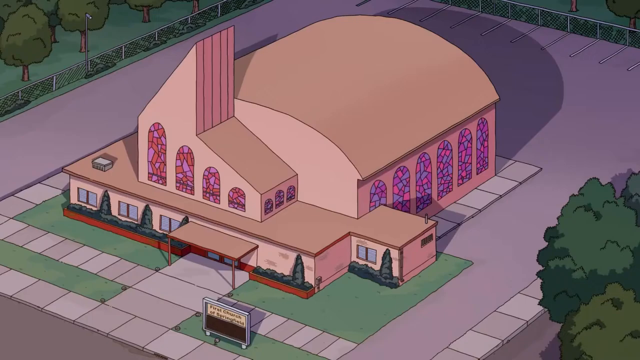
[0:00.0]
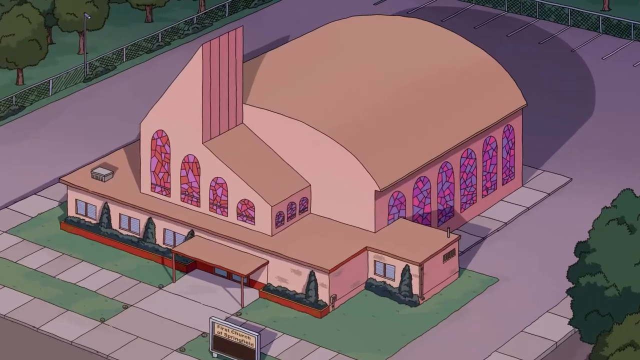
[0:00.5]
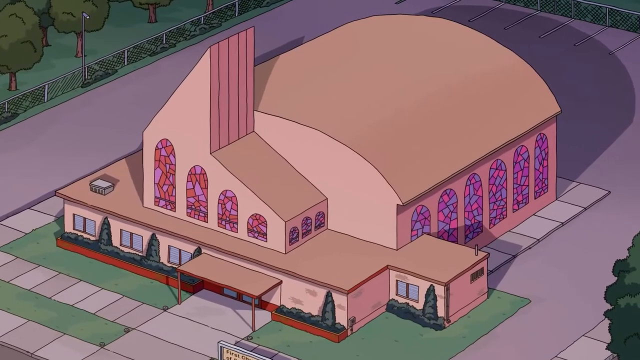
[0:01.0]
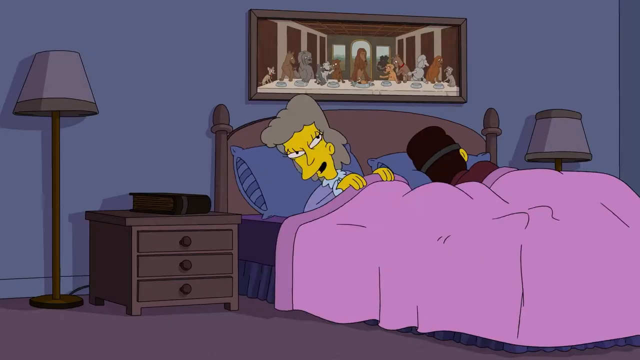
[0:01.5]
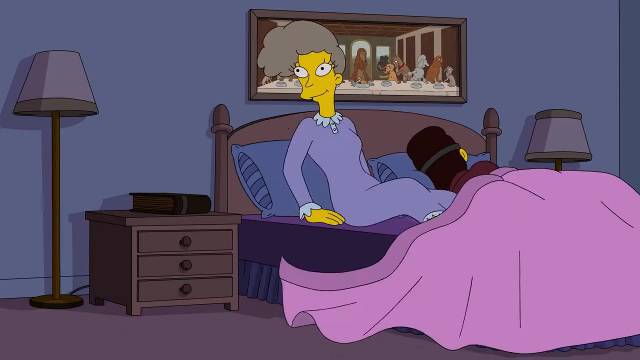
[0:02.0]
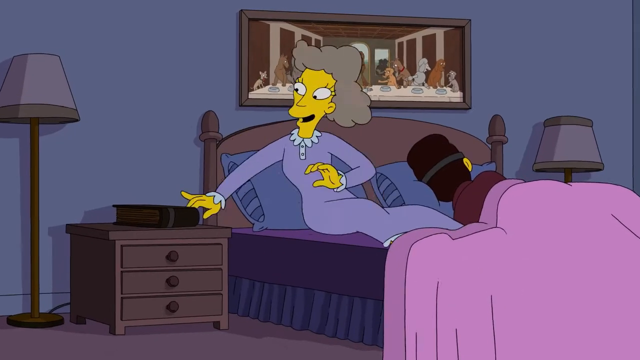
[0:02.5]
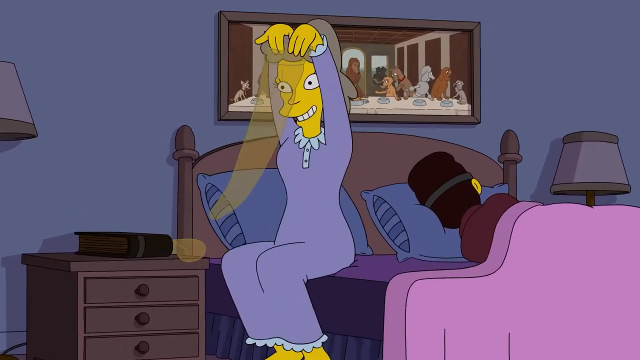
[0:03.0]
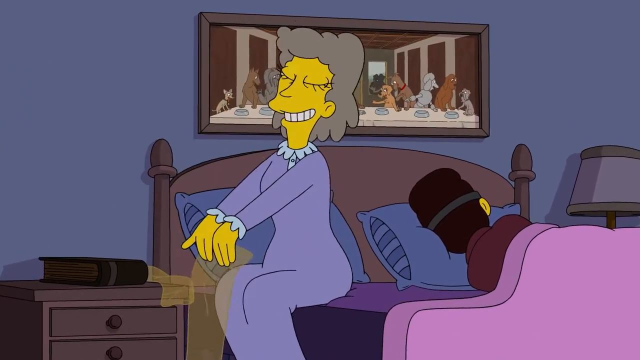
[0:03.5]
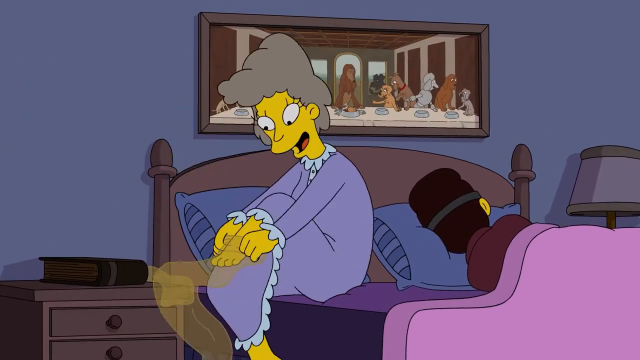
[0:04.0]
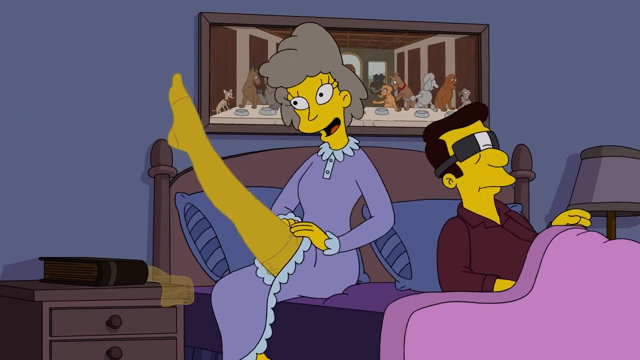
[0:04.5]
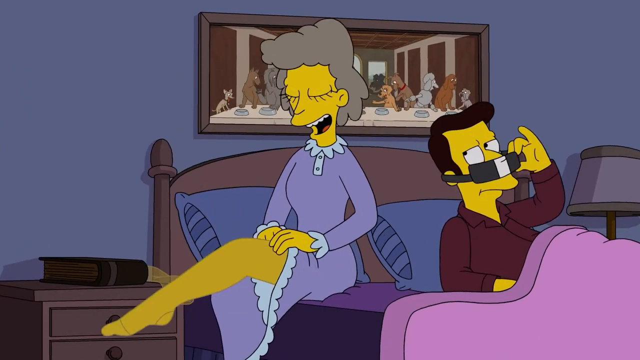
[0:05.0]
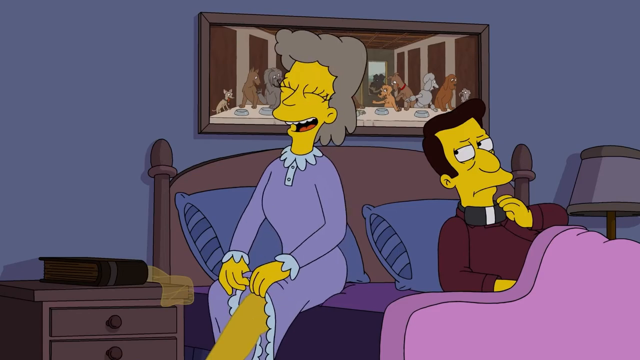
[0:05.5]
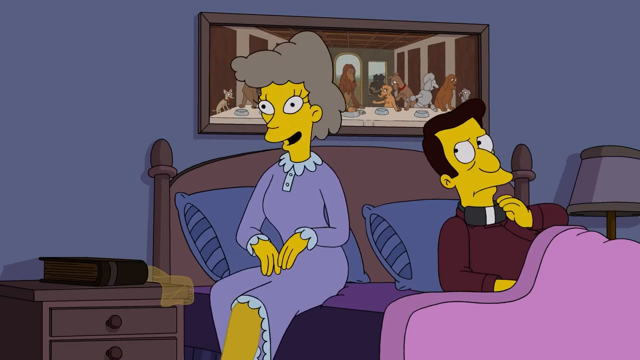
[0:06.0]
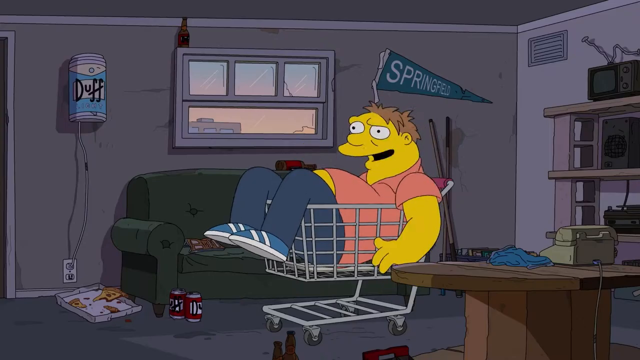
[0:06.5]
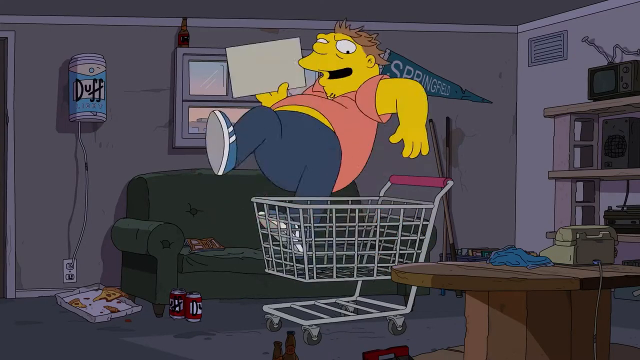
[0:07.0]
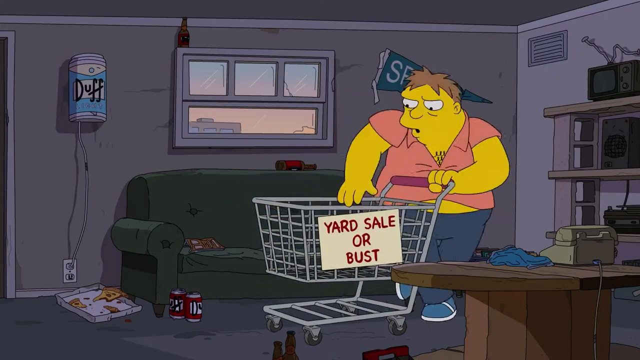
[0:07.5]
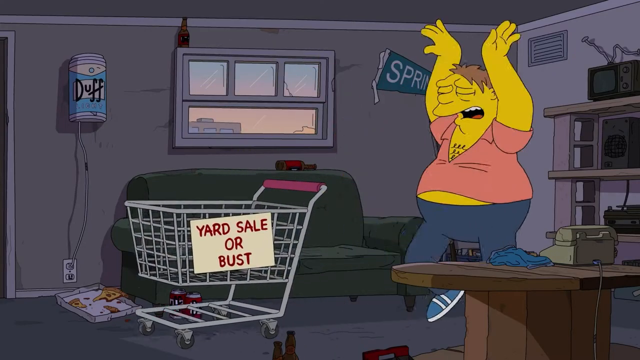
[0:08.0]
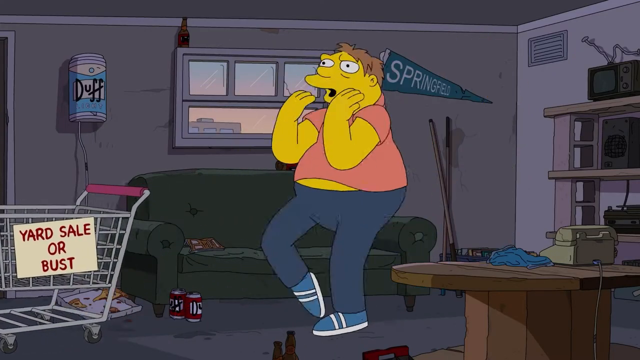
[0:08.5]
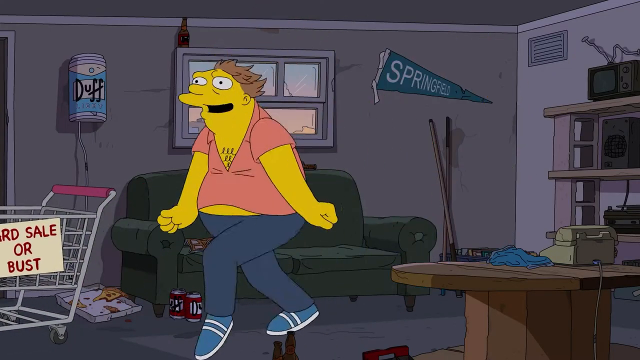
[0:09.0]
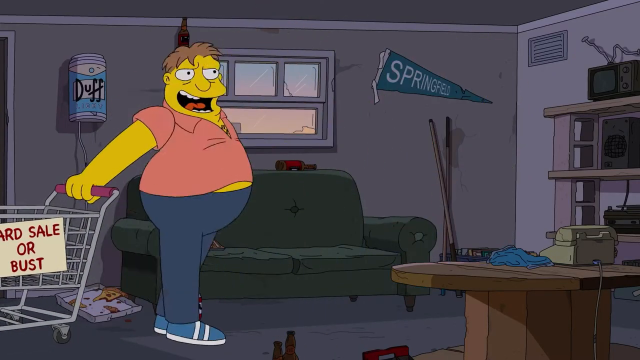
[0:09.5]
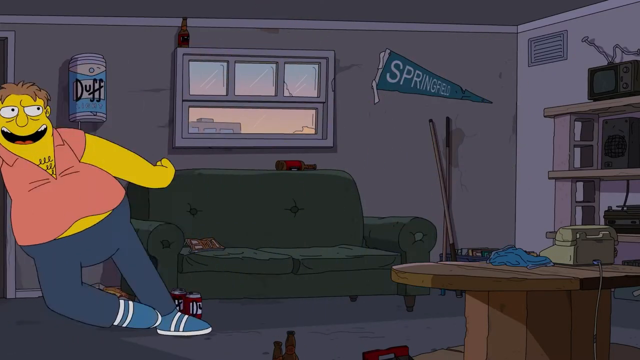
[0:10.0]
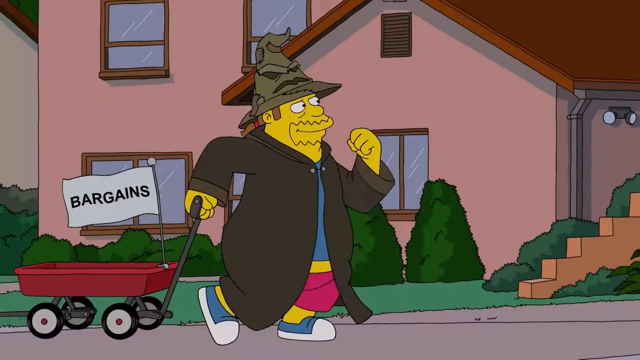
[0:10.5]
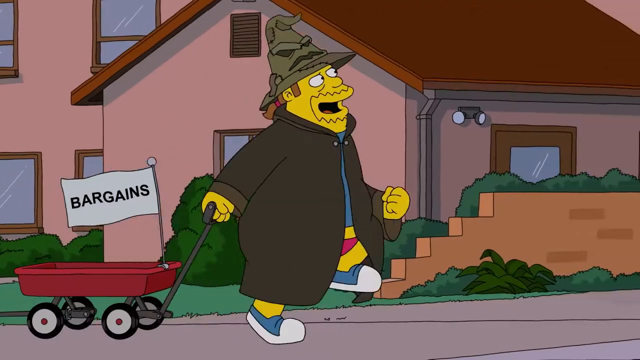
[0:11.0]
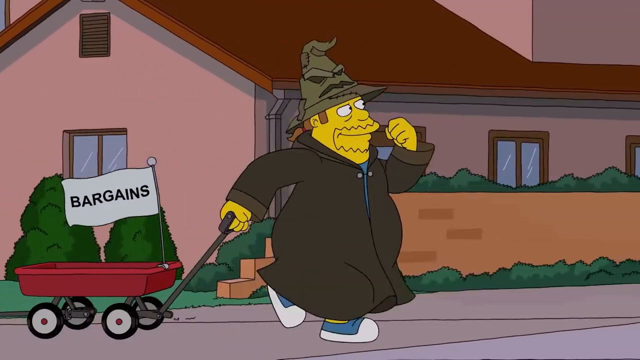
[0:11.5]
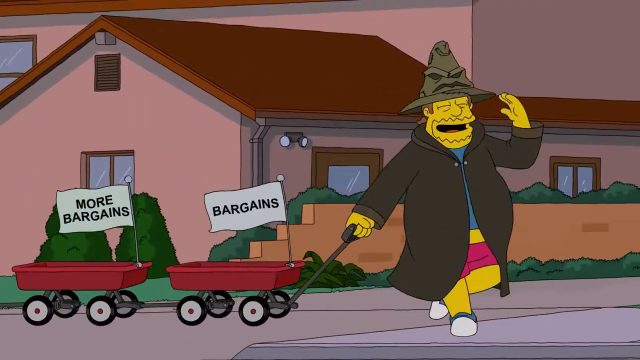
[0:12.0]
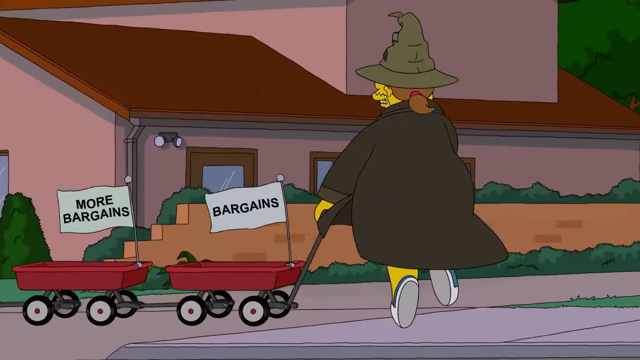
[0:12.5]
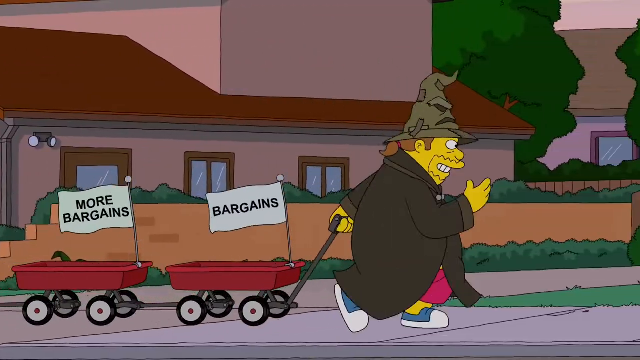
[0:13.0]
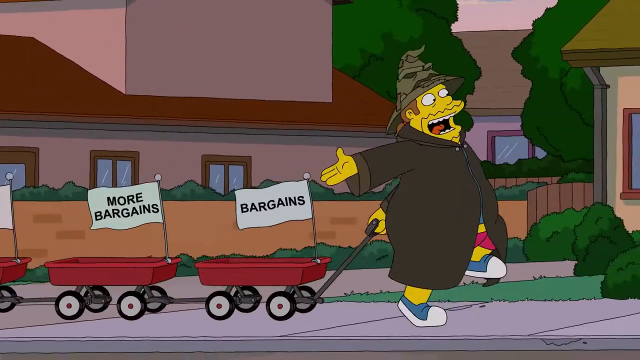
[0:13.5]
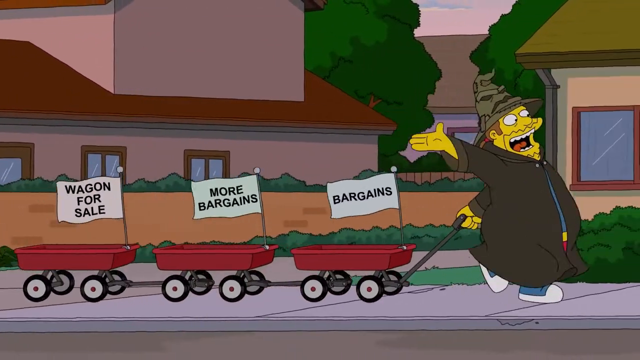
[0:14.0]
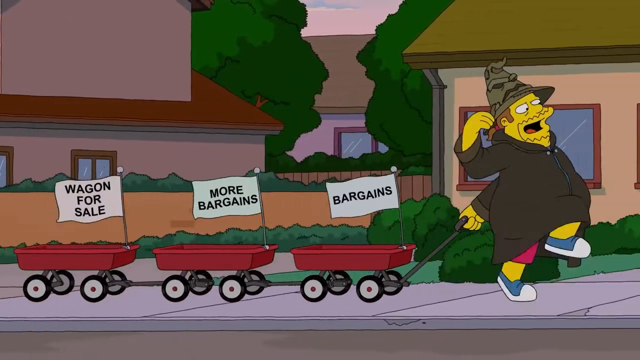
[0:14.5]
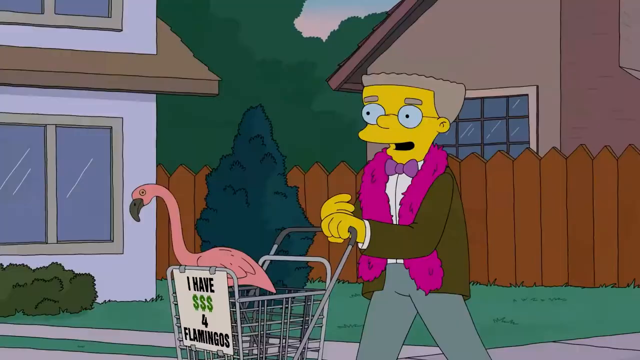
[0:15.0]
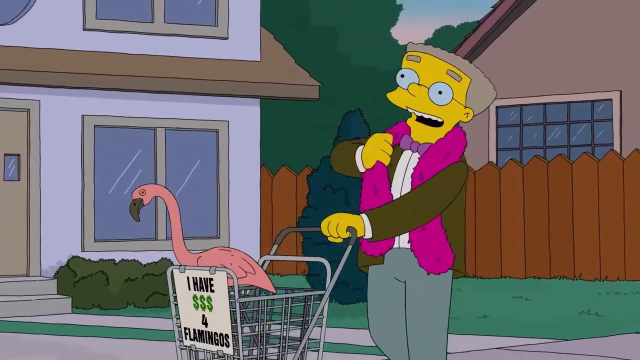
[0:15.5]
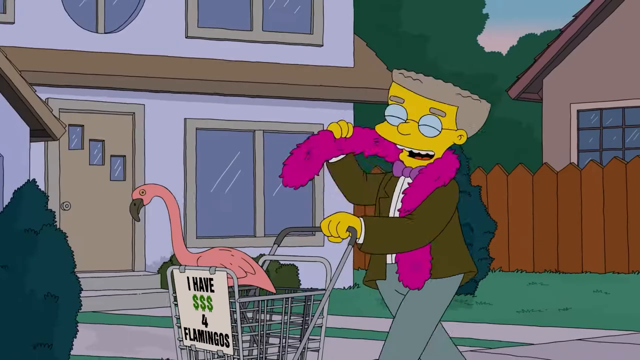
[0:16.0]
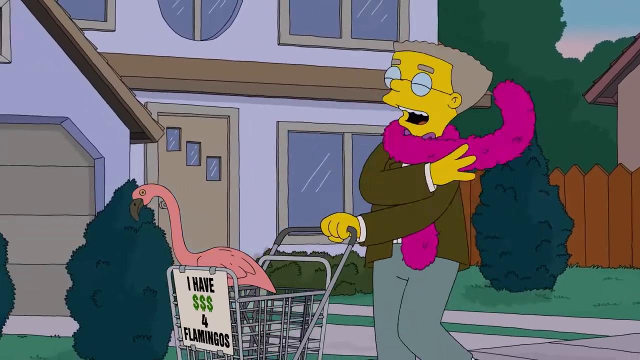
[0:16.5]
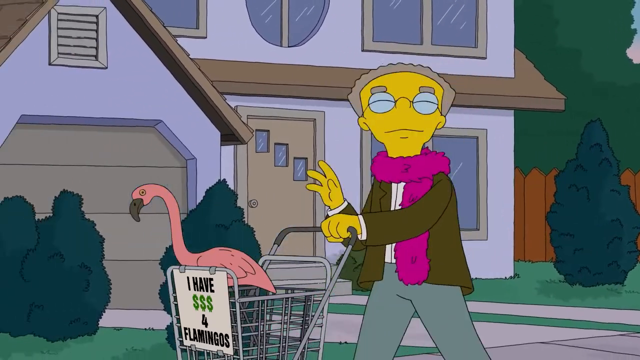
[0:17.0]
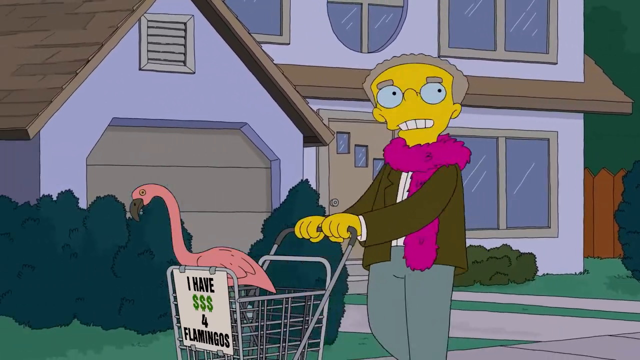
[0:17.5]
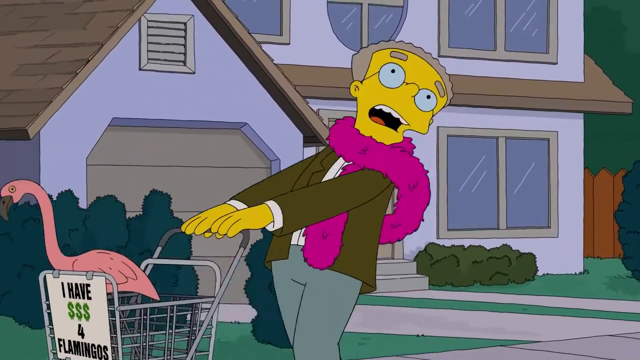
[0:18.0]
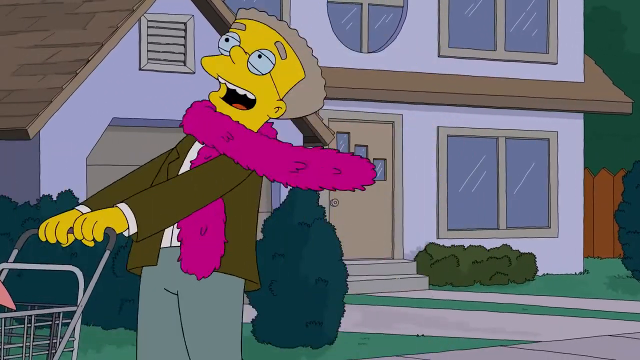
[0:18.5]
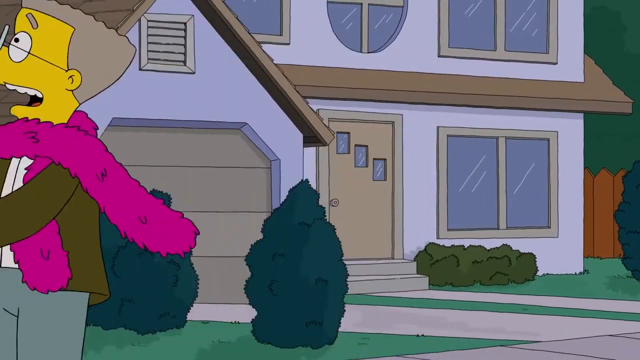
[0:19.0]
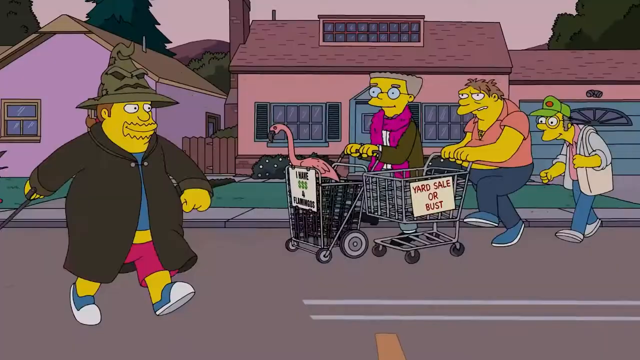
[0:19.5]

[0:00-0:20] A town with a church appears, and the camera kind of zooms in on what looks like the church. A lady in pajamas gets out of bed while her husband sleeps next to her; she puts on her stocking, and her husband does not look very pleased. Next, a guy sits in a shopping cart in what looks like a rundown house, with a Duff beer sign and a half-eaten pizza; he dances and is happy. Another guy, wearing the sorting hat, walks and skips with a wagon that says "bargains"; the signs read "bargains and more bargains" and "wagon for sale," and he is super happy. Then Mr. Smithers, wearing a bow, has a pink flamingo in a basket with a sign that says "i have money money money for flamingos"; he sings and is super happy. All four of these people are turning.